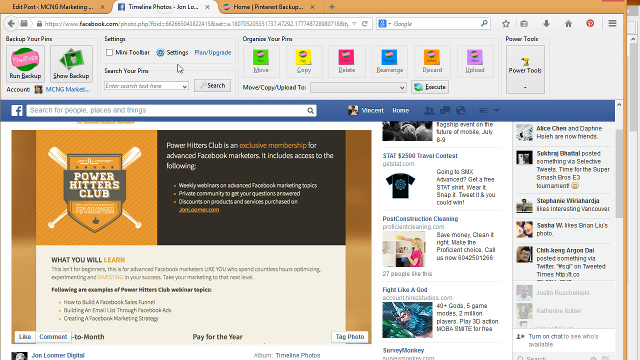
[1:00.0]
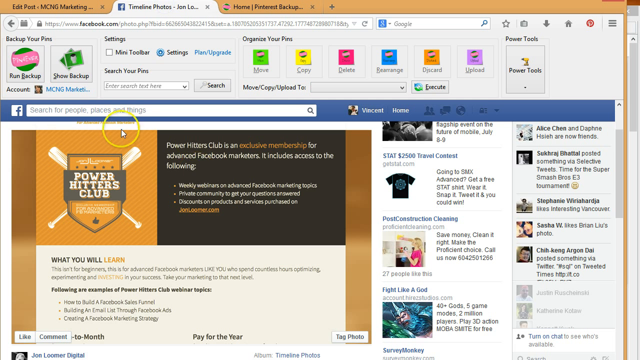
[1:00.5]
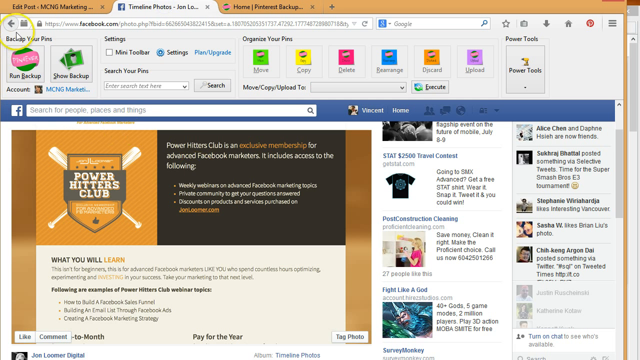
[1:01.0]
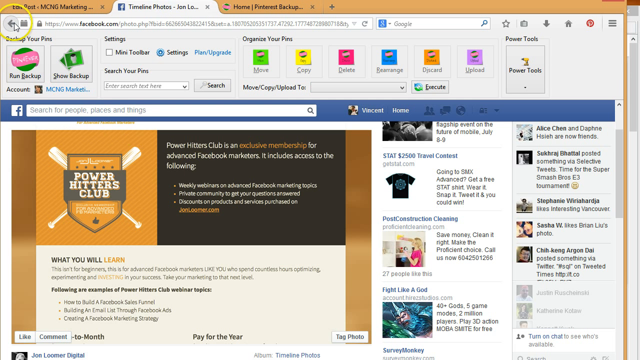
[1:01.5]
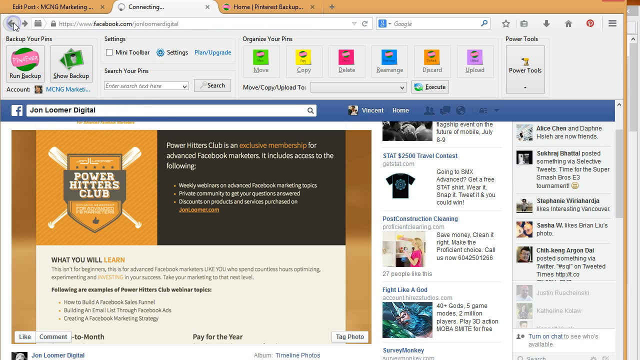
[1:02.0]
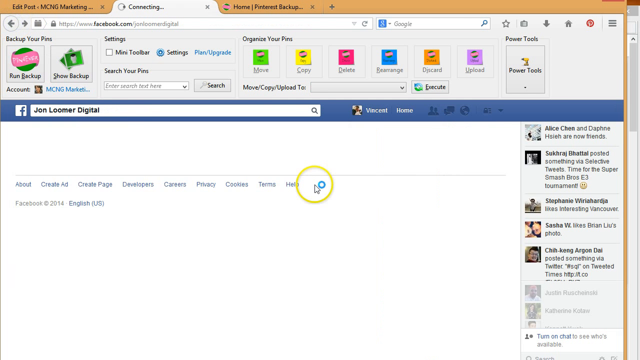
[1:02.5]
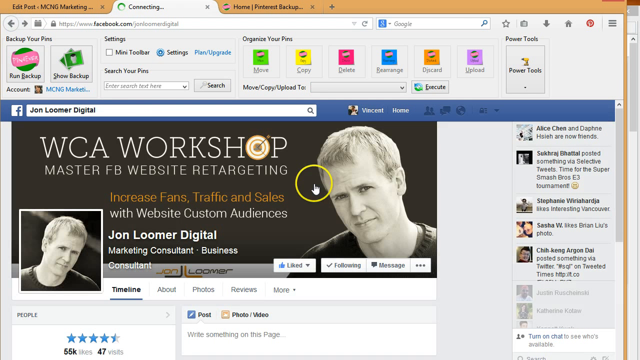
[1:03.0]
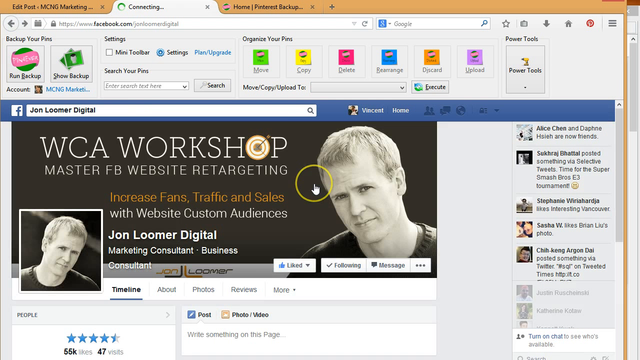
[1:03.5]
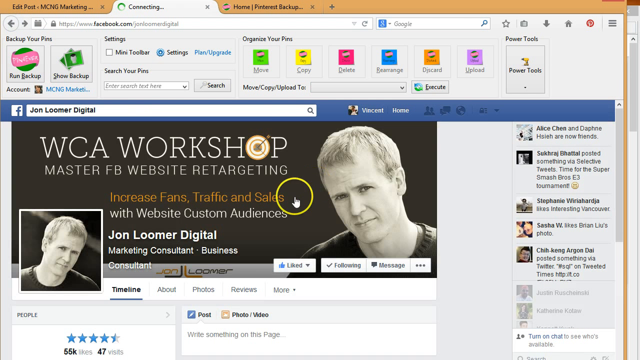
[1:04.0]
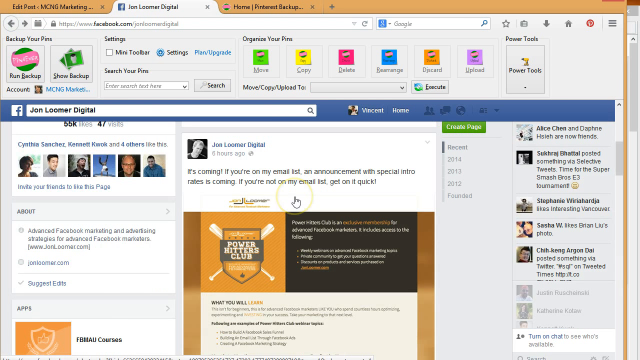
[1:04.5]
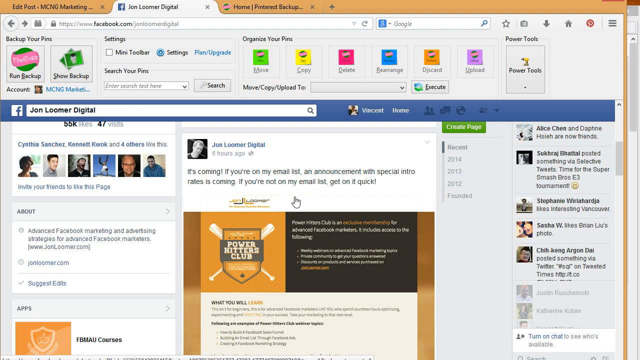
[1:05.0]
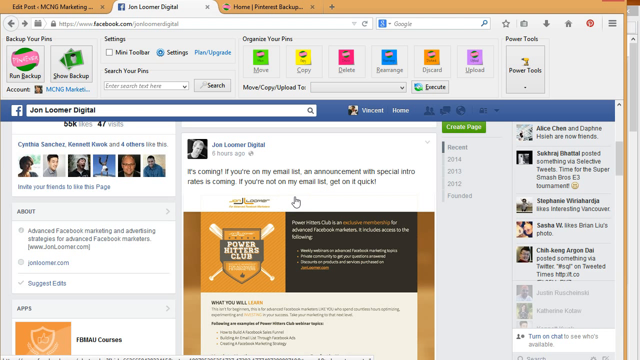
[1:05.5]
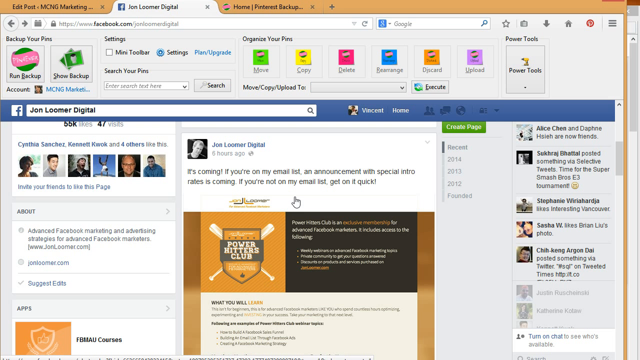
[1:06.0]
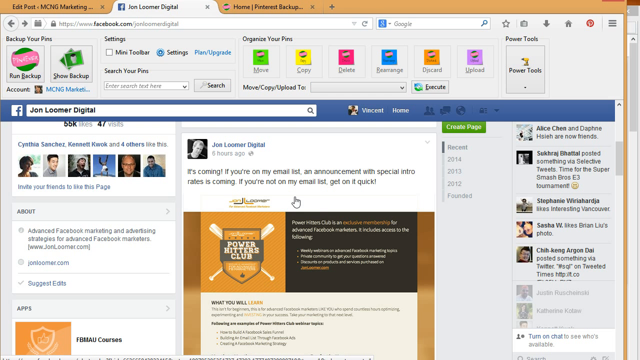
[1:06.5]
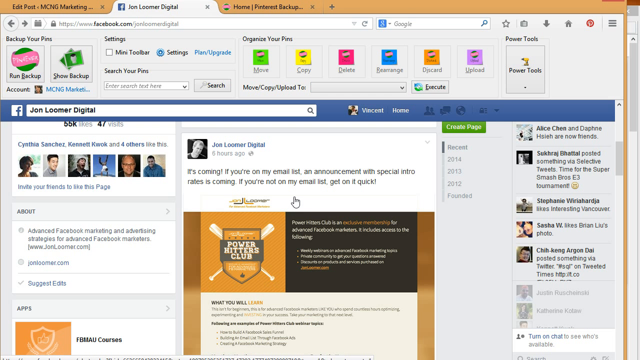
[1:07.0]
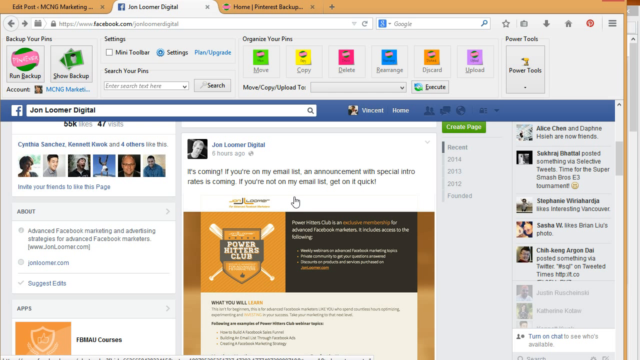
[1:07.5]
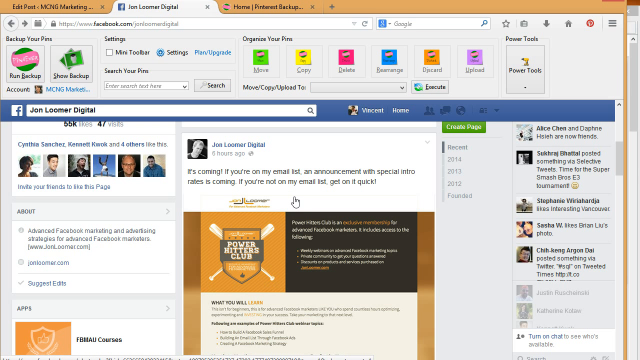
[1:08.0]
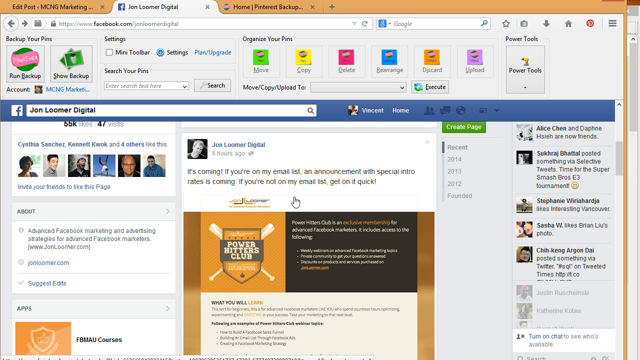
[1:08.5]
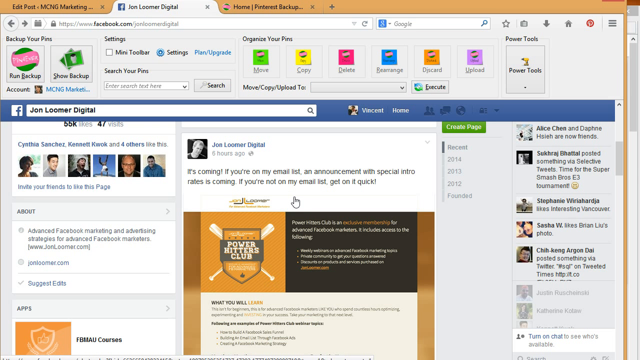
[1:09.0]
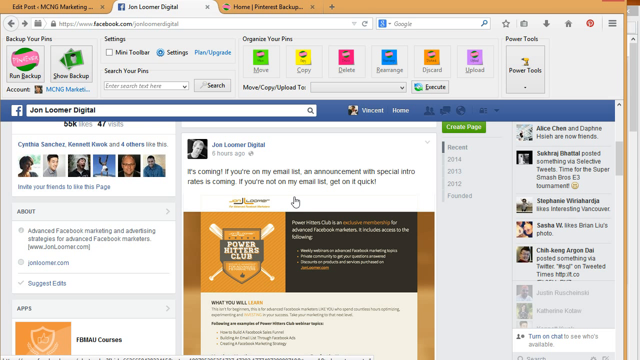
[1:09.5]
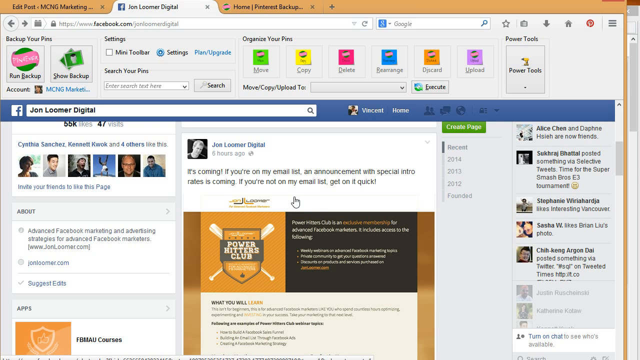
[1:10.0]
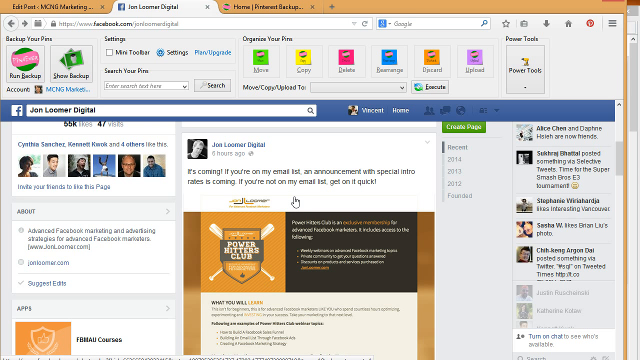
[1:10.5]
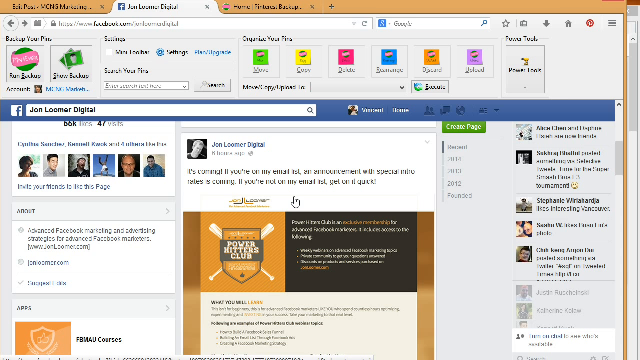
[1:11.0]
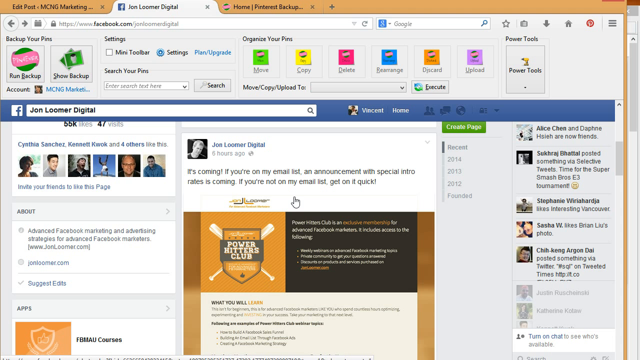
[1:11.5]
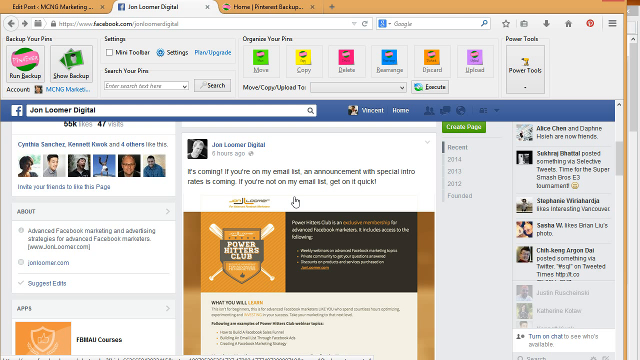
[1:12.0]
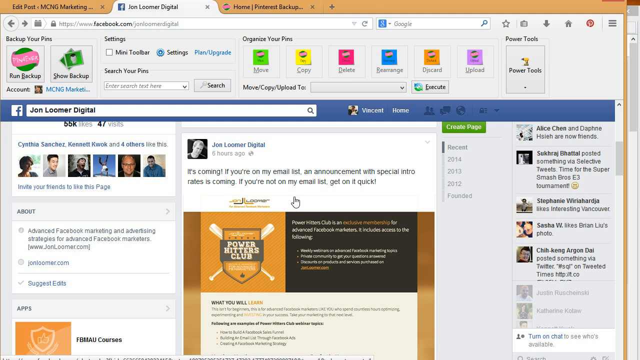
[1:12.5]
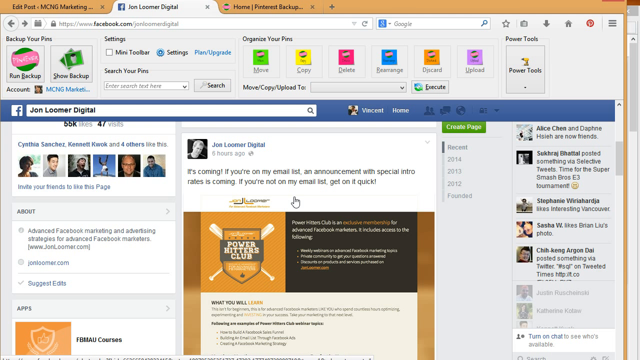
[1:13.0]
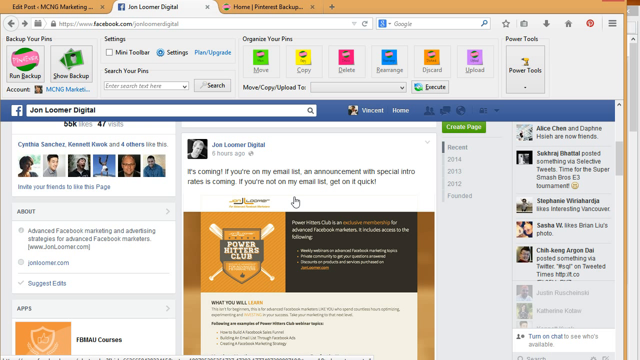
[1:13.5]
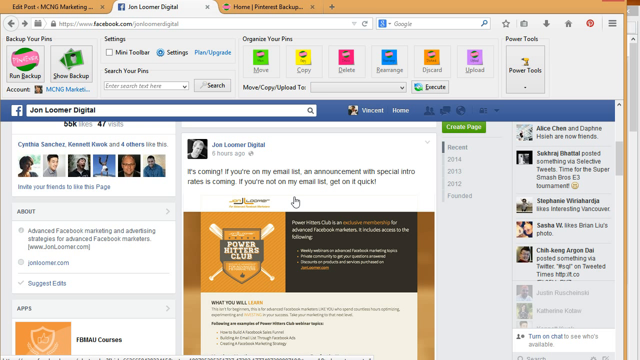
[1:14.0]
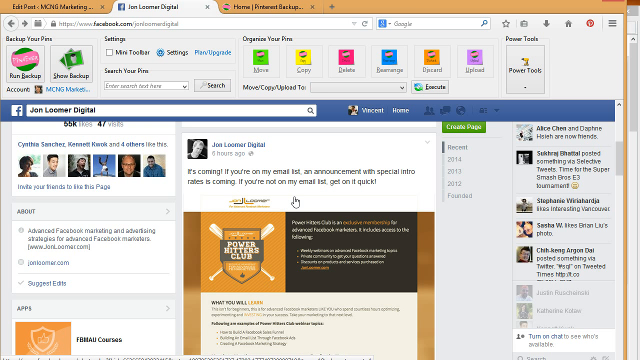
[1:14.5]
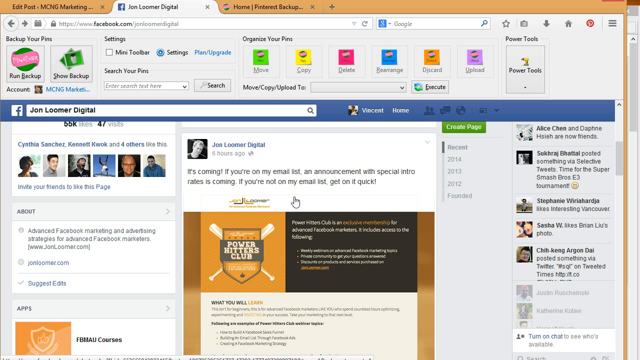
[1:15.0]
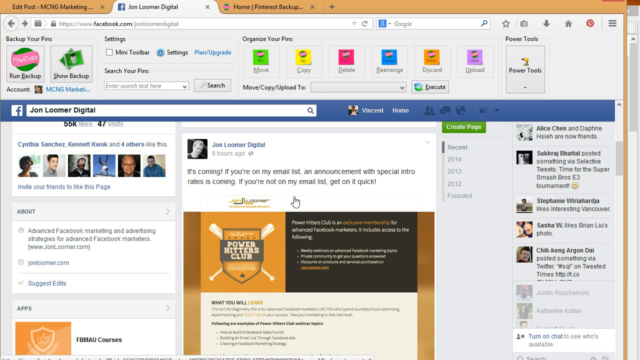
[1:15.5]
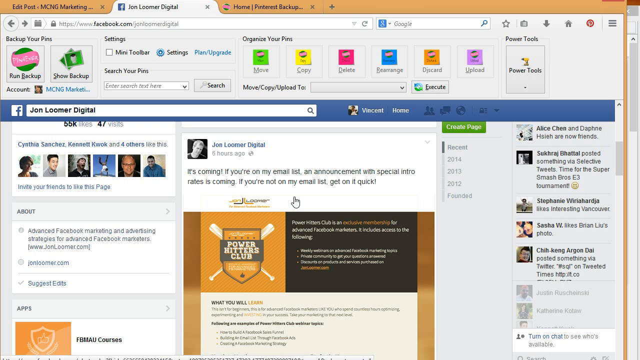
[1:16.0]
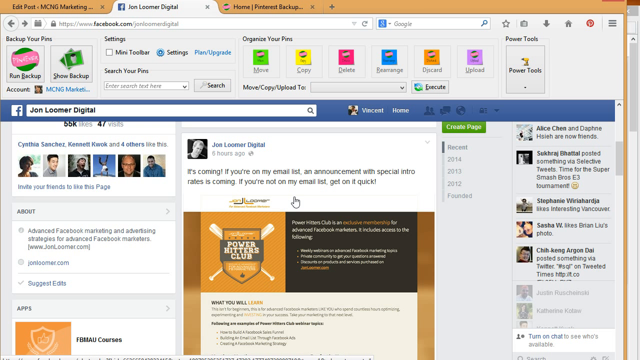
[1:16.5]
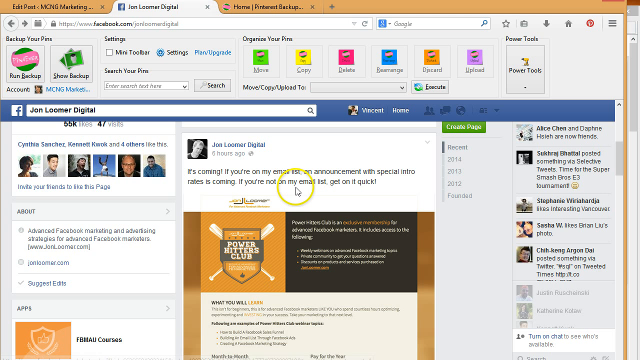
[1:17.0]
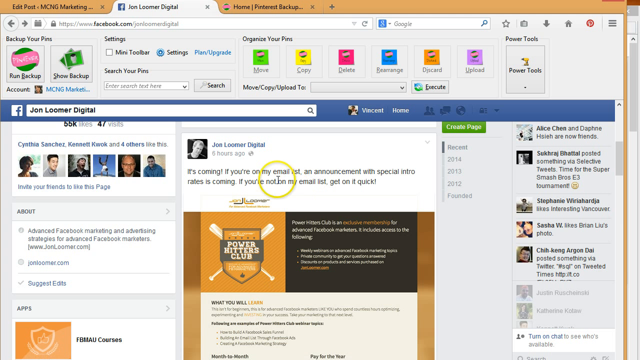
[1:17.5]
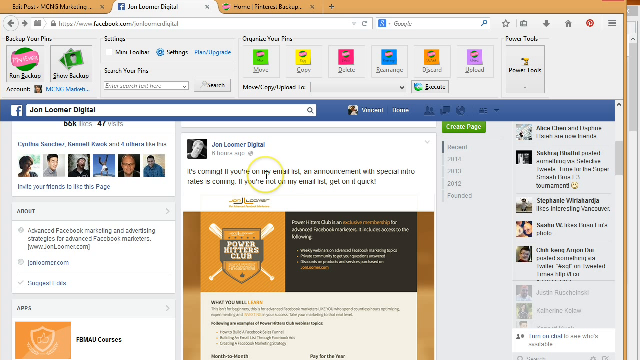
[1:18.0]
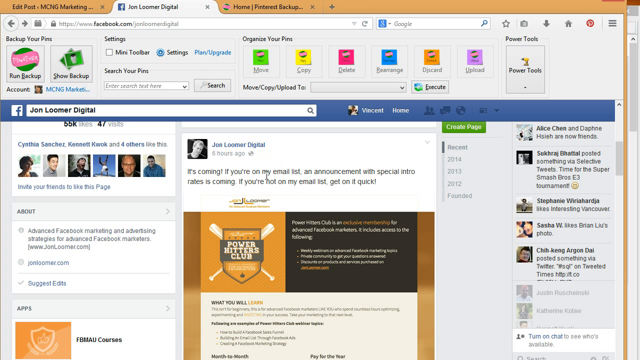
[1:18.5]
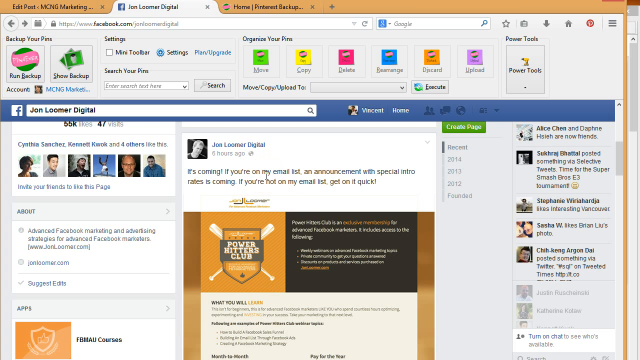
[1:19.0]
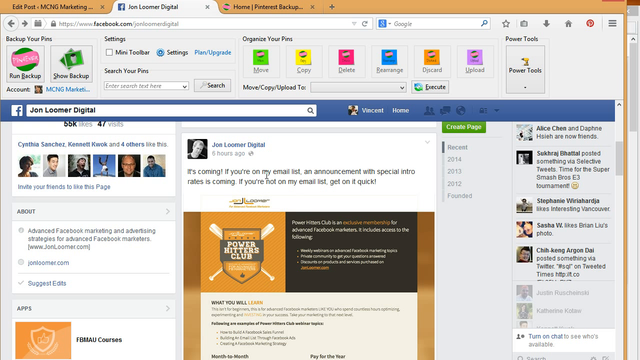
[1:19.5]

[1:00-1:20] A website called Power Hitters Club appears on a computer, with a description of what it is. Someone clicks on all different things with a cursor outlined in a yellow circle, changing the settings and what is on screen. On the right-hand side are different articles and pictures, including a picture of a shirt and a picture of a woman in a pink shirt. The cursor hits a WCA workshop, and random things flash on the screen as the cursor moves very quickly around. The cursor is white on a white page.